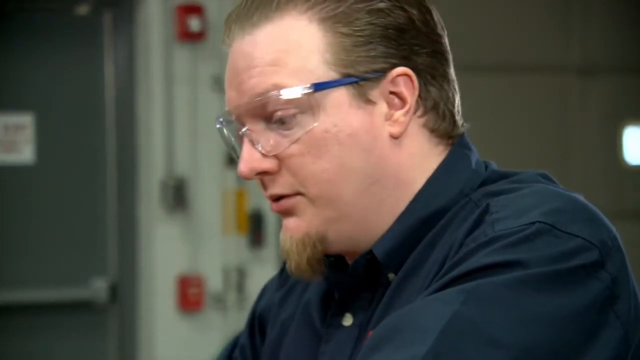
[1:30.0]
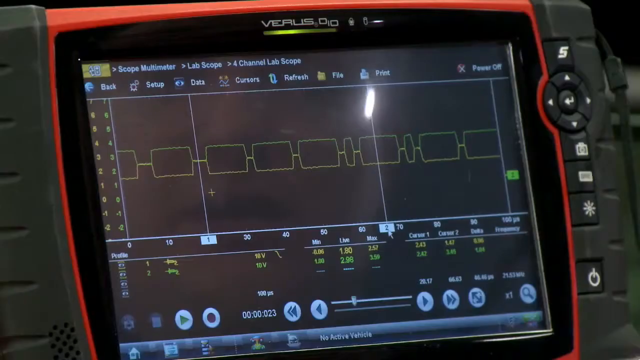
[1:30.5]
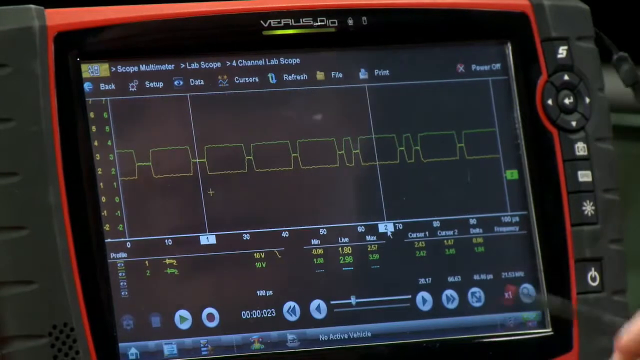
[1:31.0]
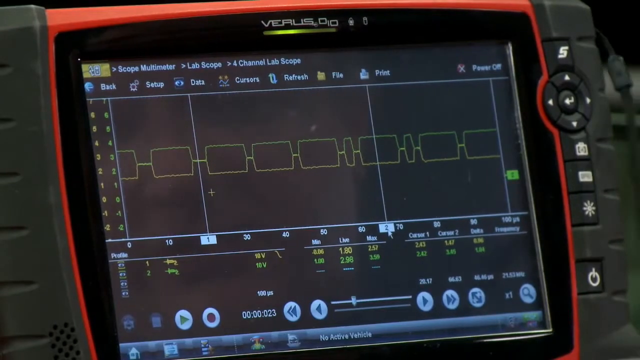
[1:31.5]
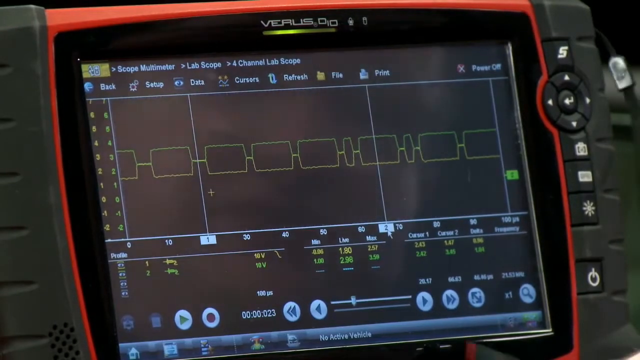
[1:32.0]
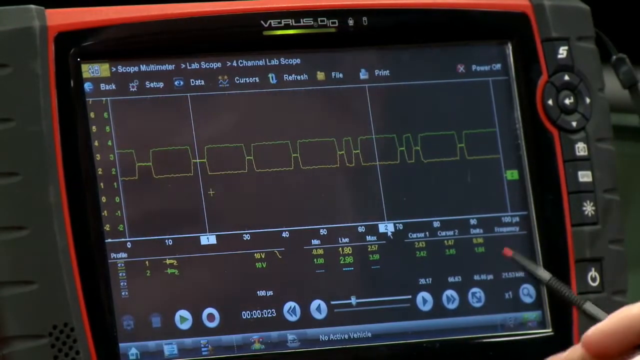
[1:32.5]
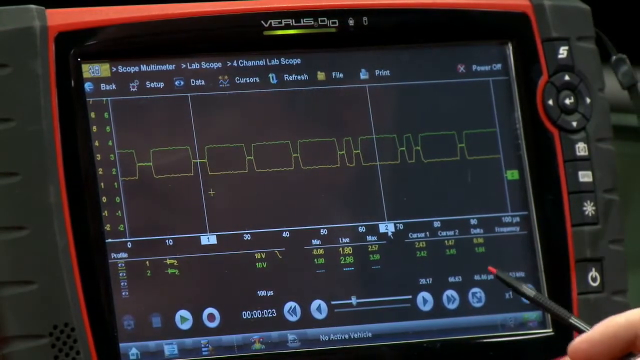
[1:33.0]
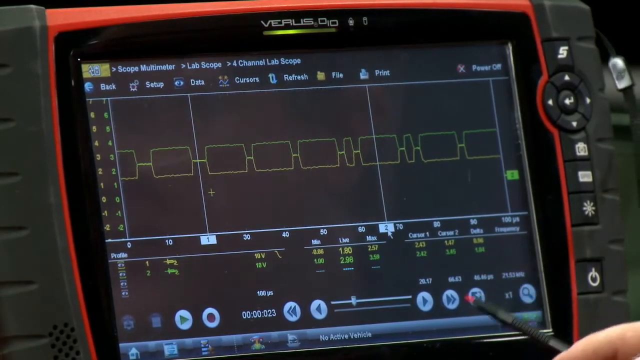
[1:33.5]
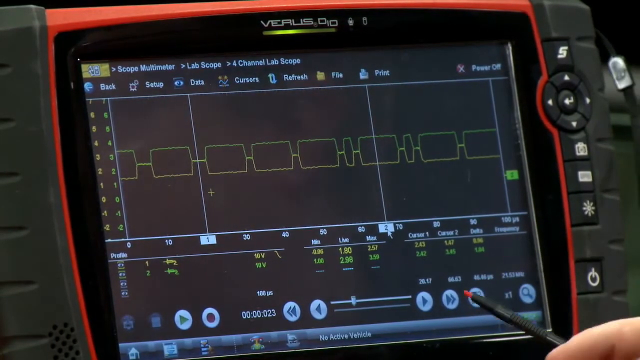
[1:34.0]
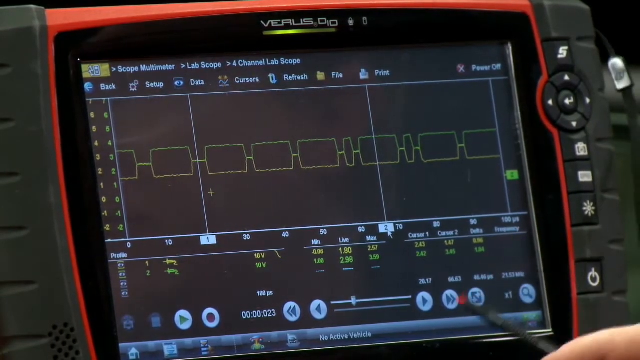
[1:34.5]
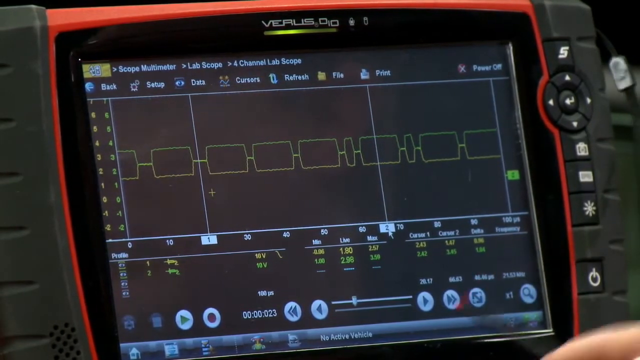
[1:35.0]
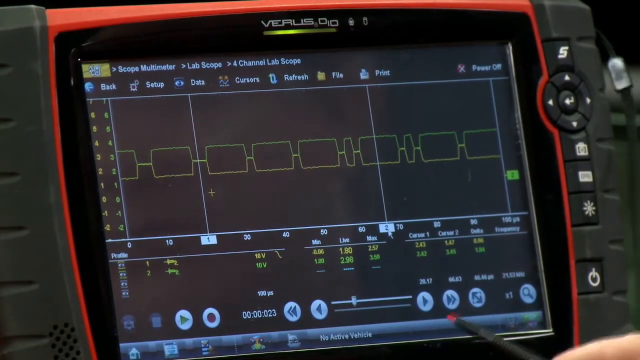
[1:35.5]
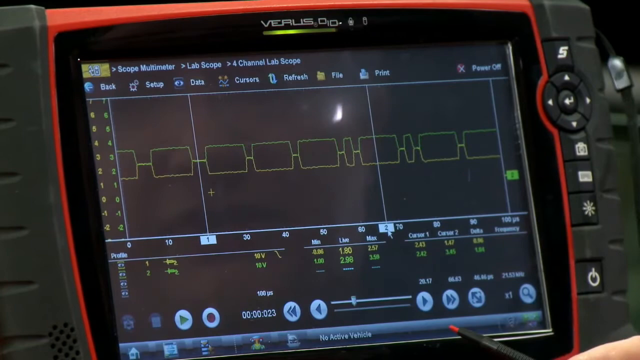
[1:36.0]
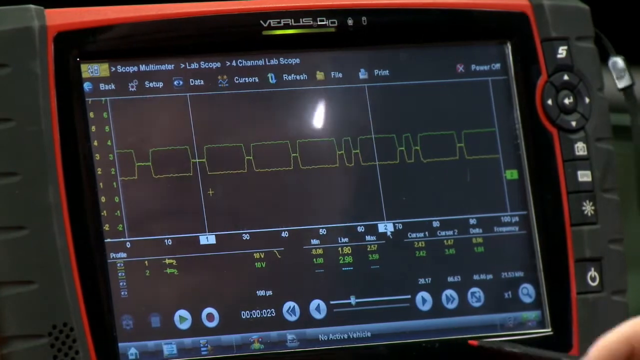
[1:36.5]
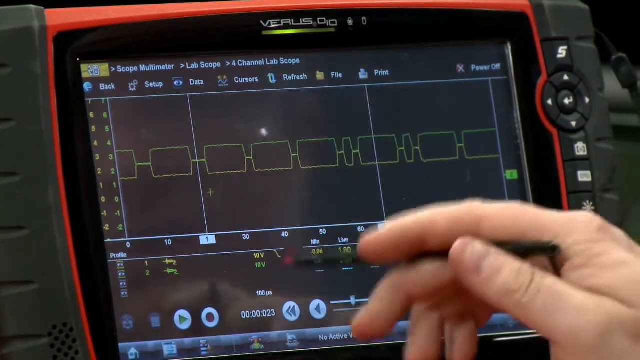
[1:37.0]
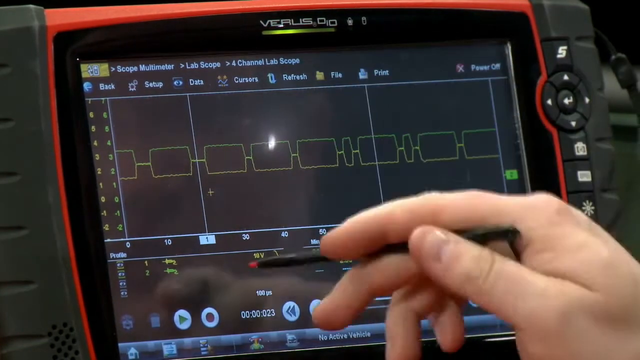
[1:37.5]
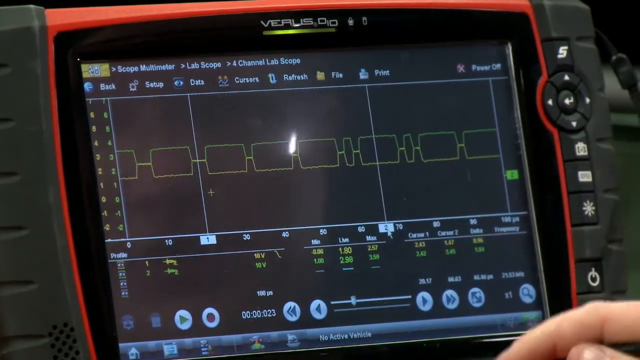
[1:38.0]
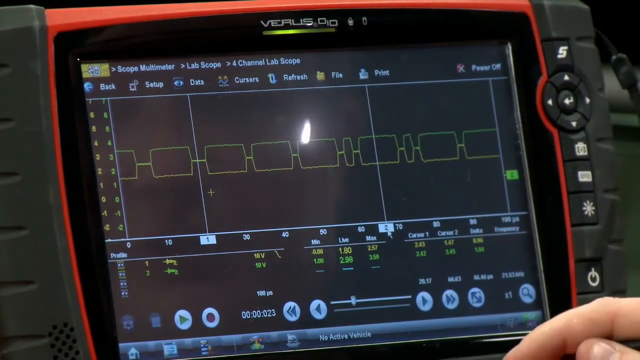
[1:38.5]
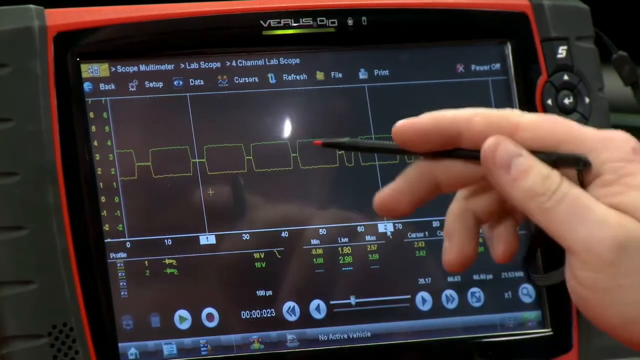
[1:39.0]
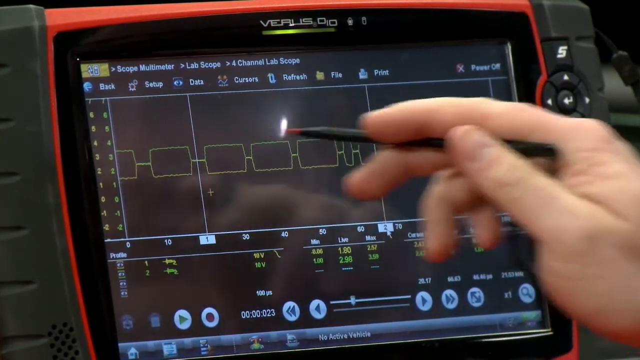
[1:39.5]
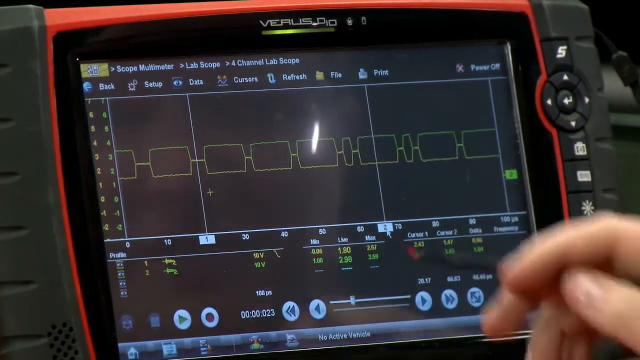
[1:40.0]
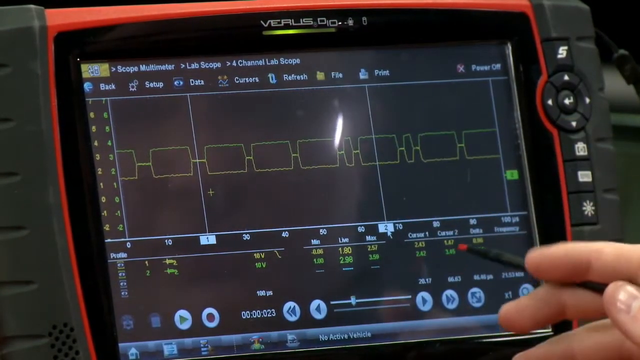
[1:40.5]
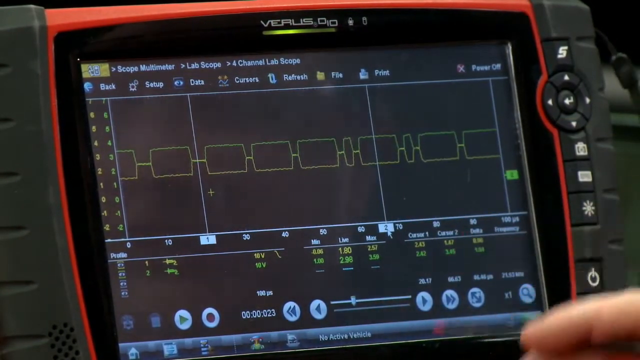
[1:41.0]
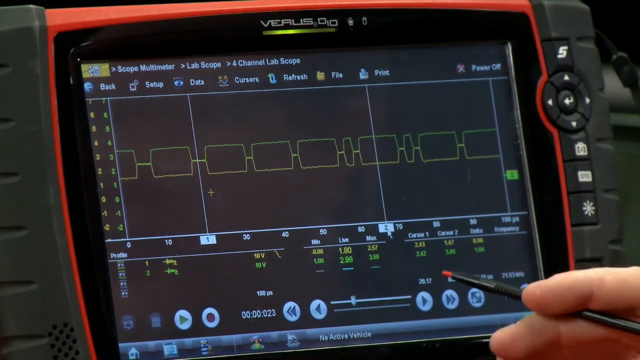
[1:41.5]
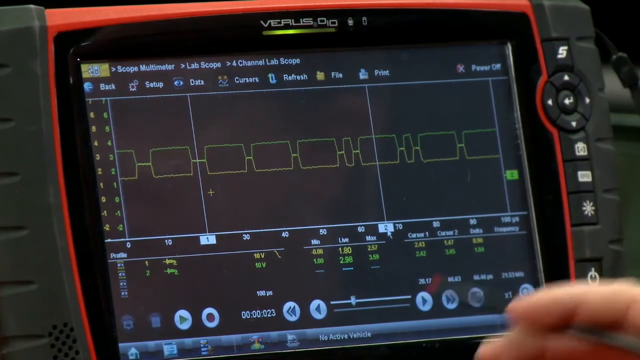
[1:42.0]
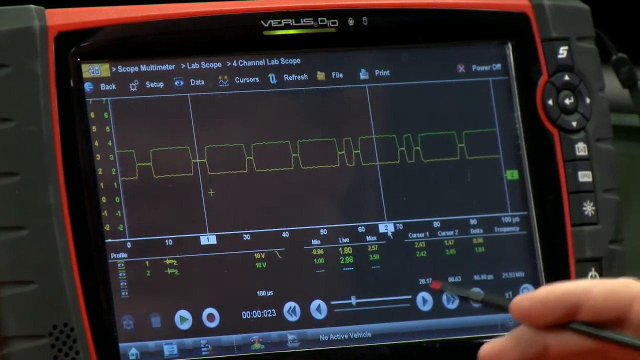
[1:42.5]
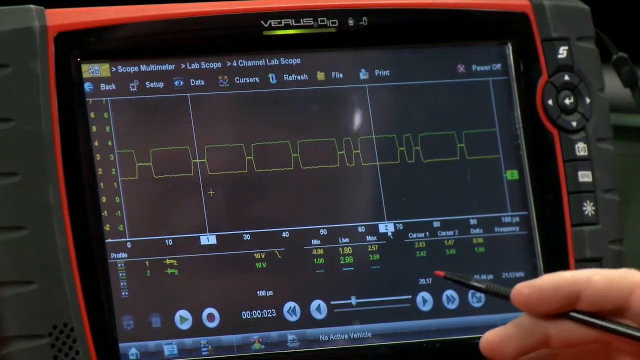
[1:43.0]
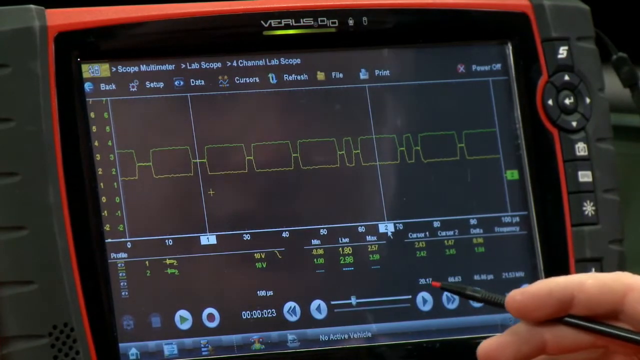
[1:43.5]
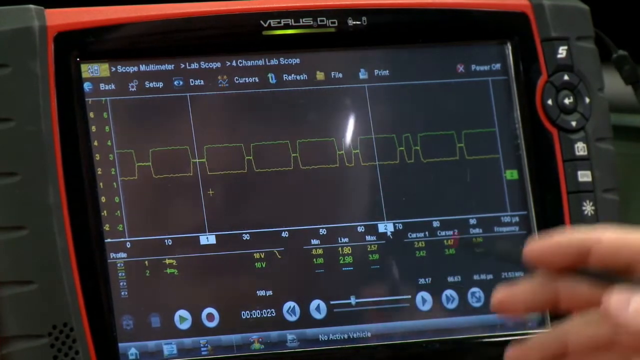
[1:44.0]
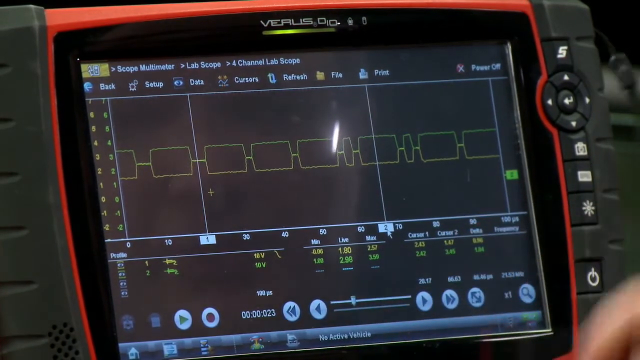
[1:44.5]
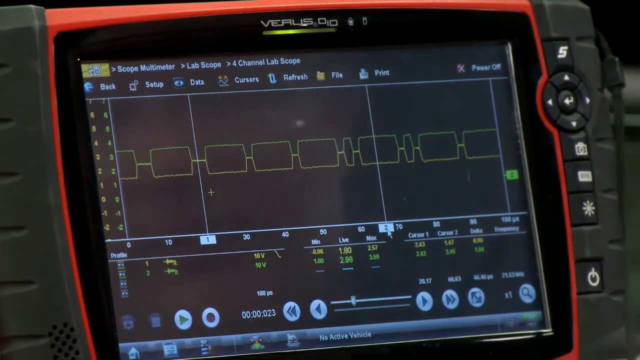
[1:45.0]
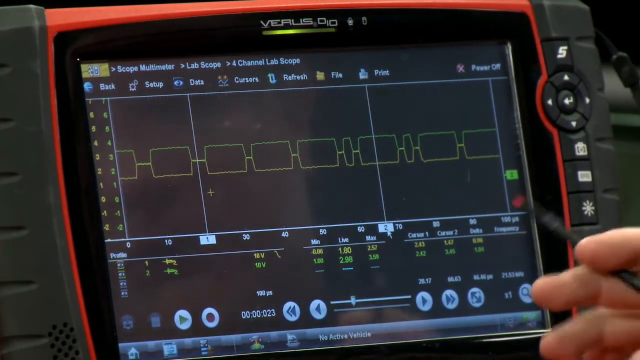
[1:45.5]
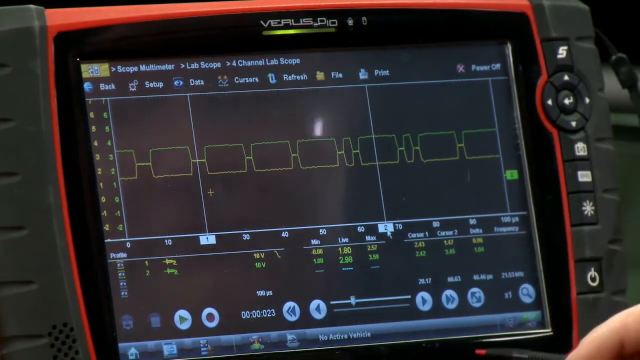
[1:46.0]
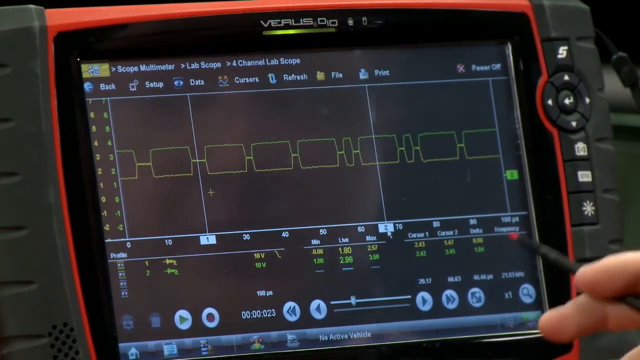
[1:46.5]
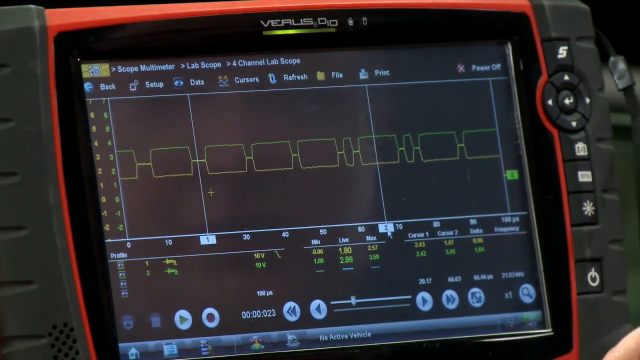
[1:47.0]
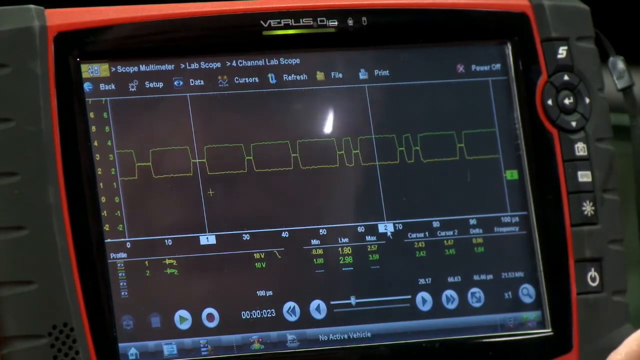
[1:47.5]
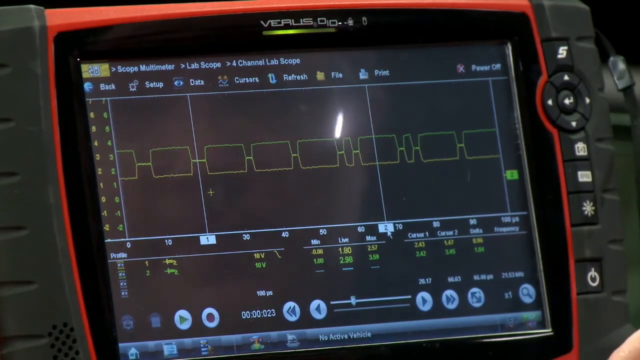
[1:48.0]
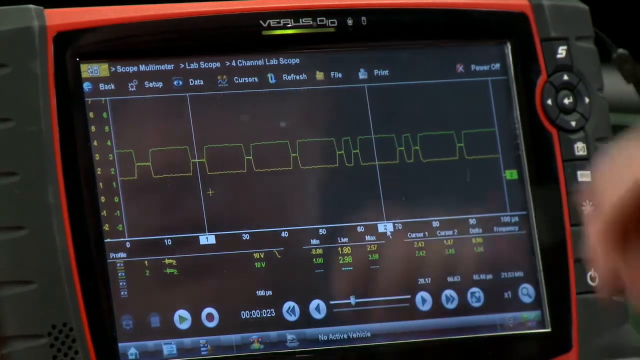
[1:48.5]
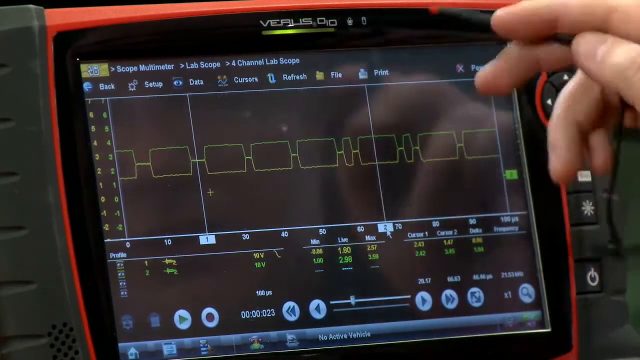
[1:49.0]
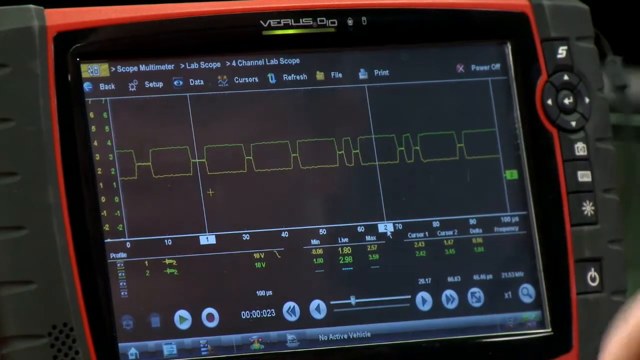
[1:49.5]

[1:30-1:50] Jason, the field trainer, keeps moving the stylus pen around on the Versus display, toward the rectangular shapes moving right to left, and points to the numbers near the bottom of the screen. There appear to be forward and backward buttons on the display, and a time counter that appears to read 23 seconds. While he speaks, his reflection is visible in the display.